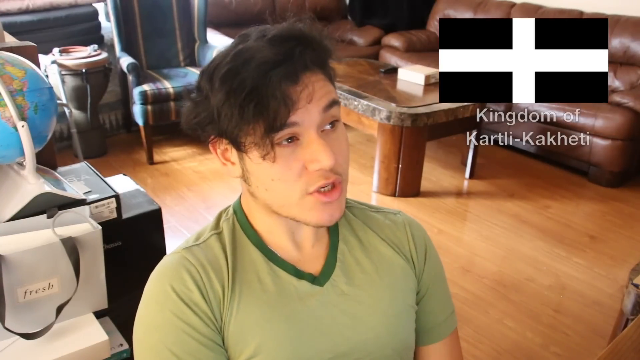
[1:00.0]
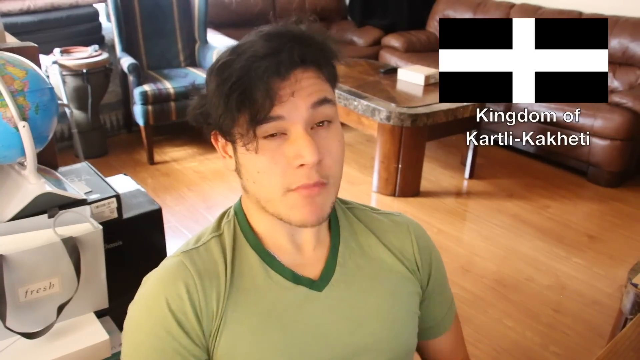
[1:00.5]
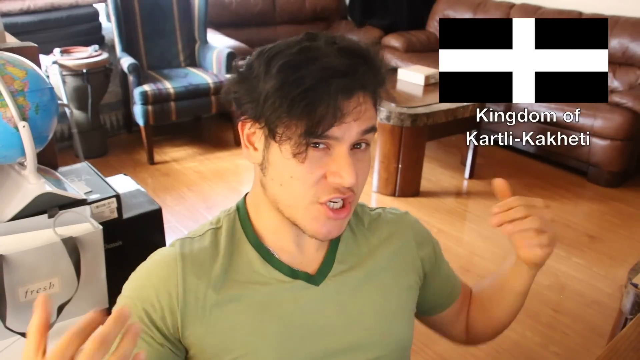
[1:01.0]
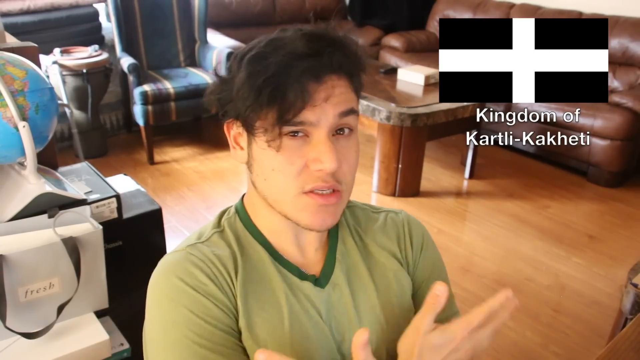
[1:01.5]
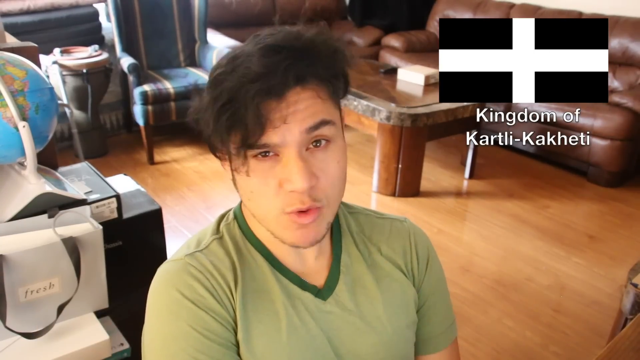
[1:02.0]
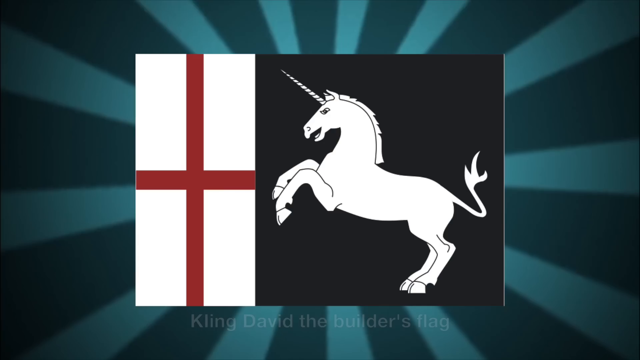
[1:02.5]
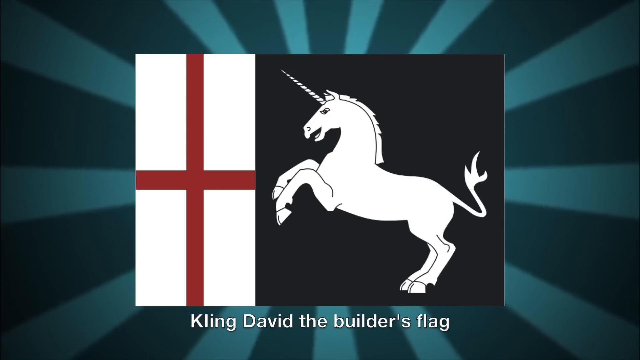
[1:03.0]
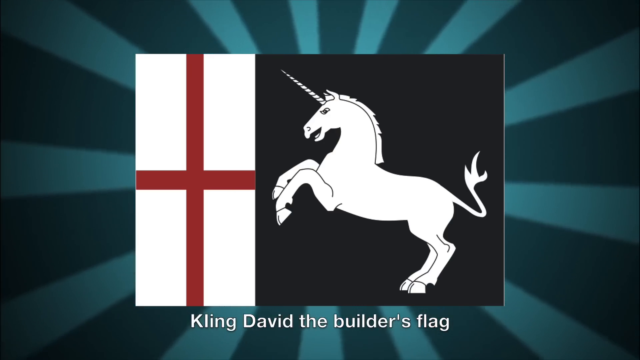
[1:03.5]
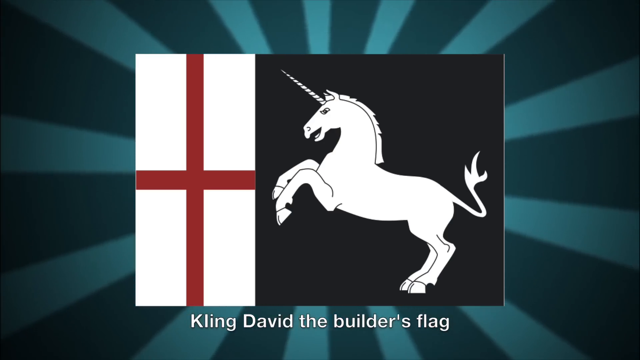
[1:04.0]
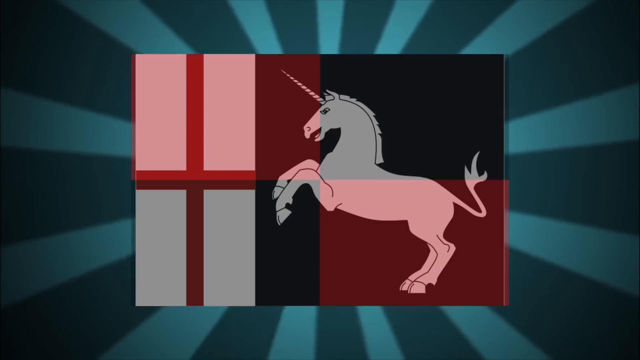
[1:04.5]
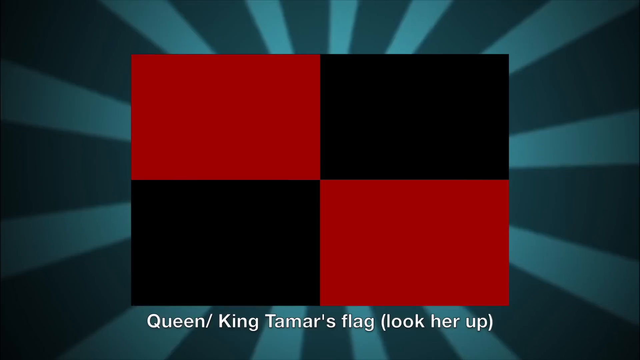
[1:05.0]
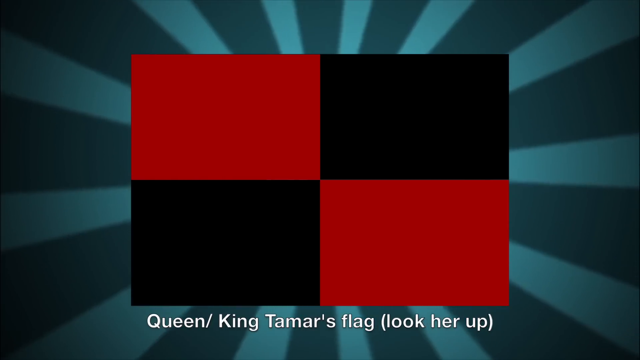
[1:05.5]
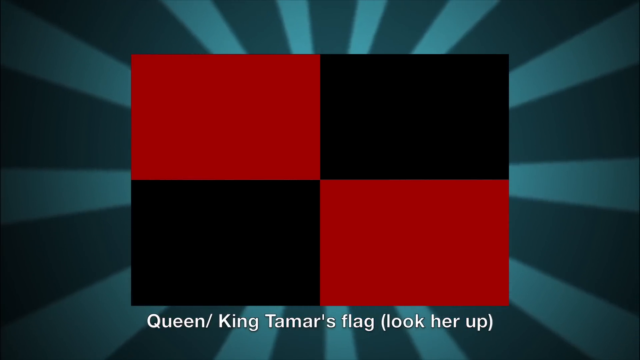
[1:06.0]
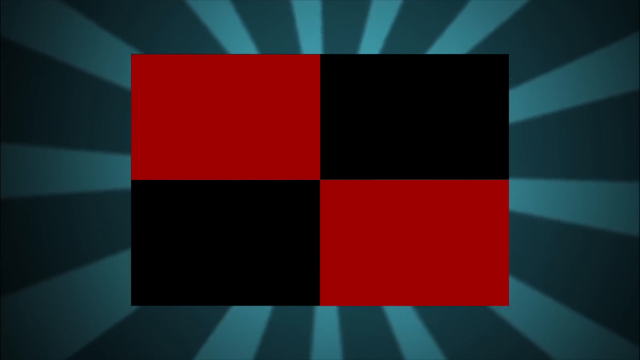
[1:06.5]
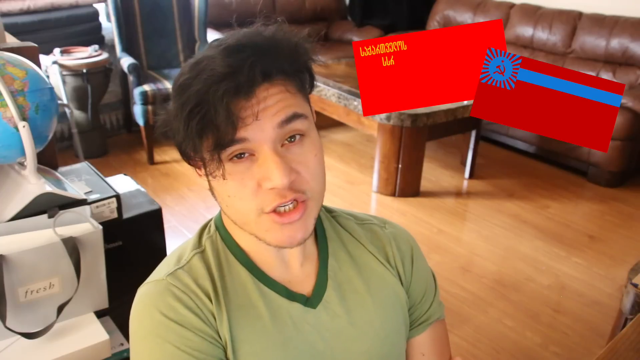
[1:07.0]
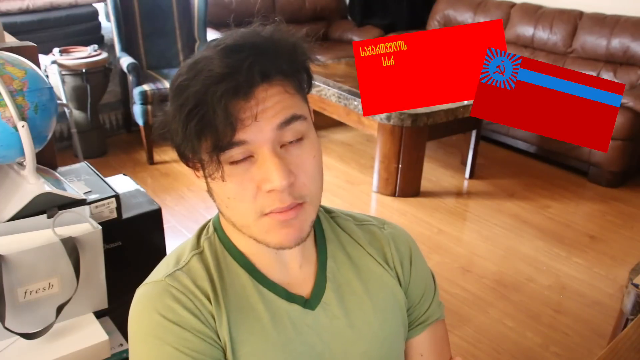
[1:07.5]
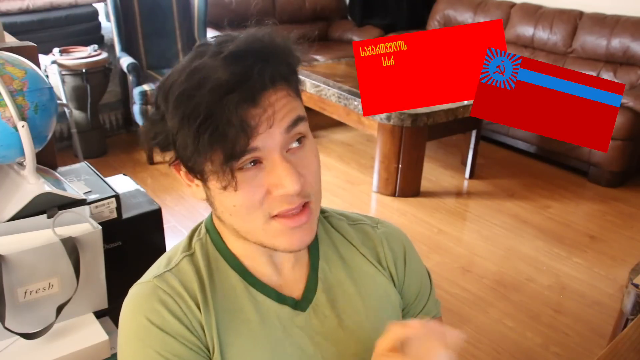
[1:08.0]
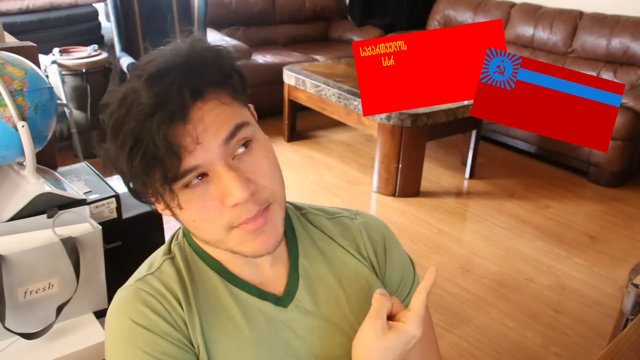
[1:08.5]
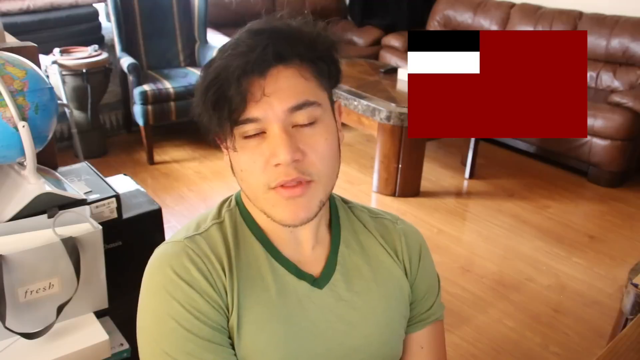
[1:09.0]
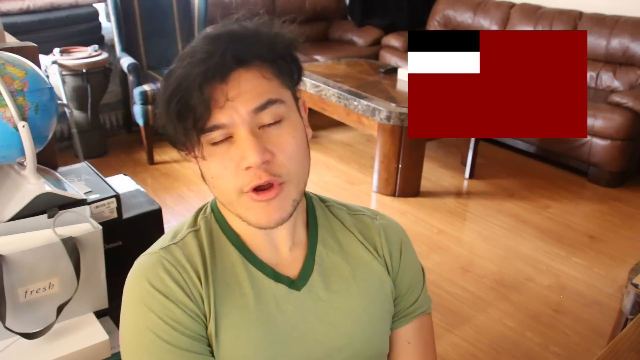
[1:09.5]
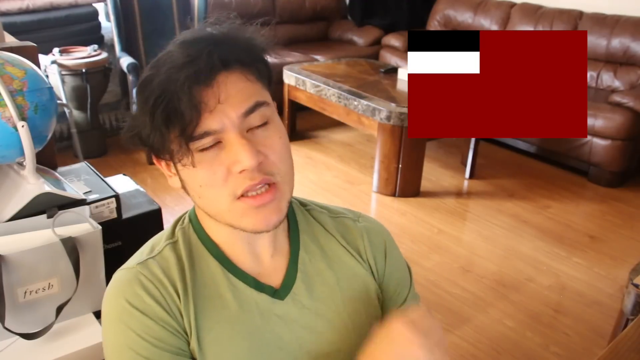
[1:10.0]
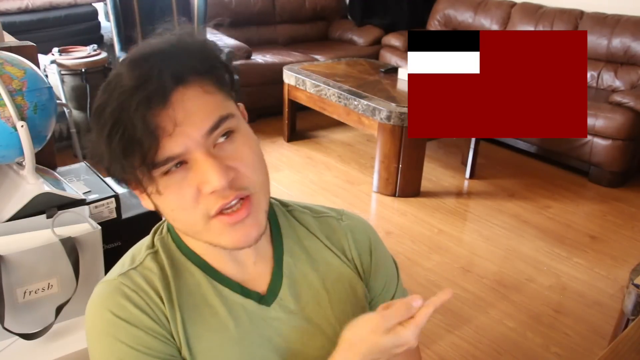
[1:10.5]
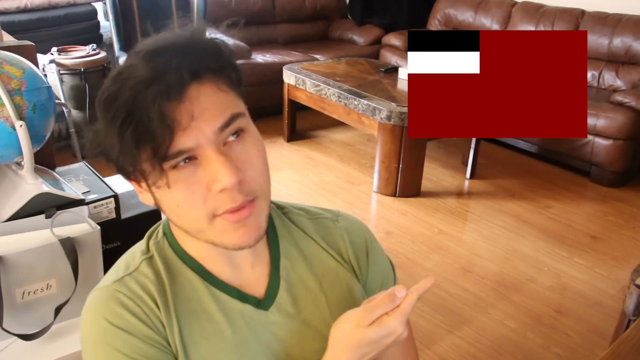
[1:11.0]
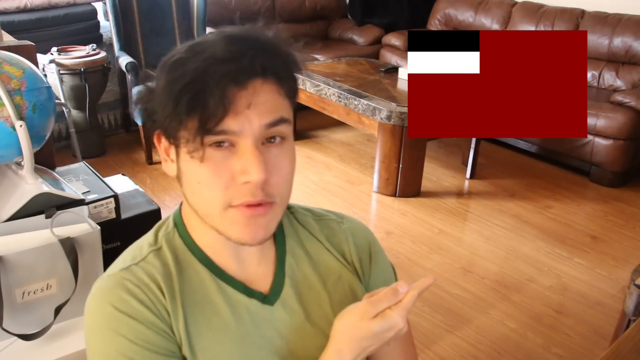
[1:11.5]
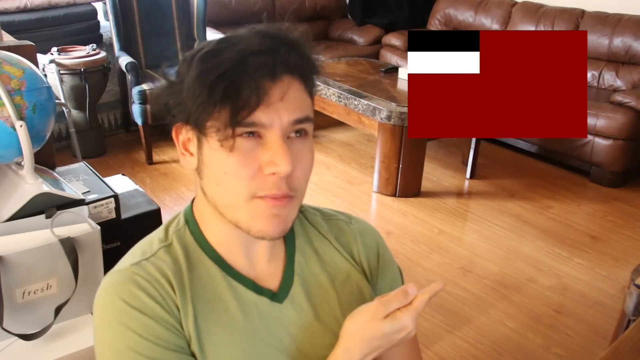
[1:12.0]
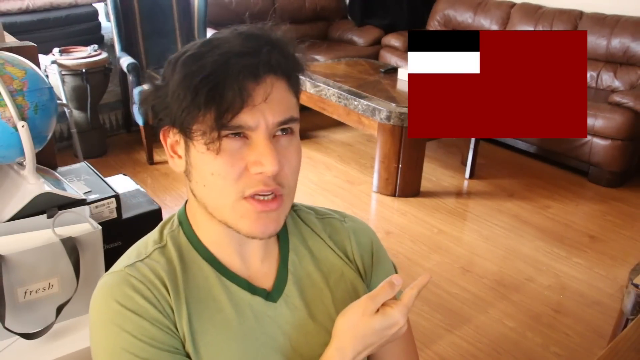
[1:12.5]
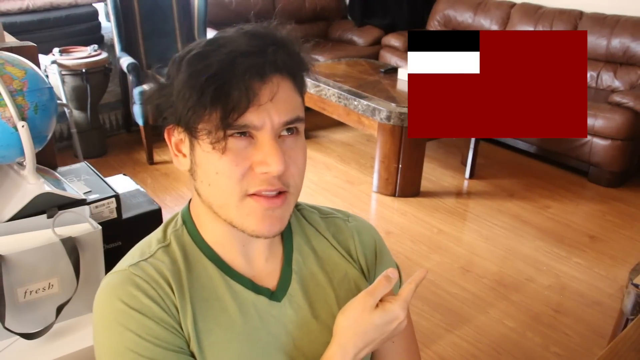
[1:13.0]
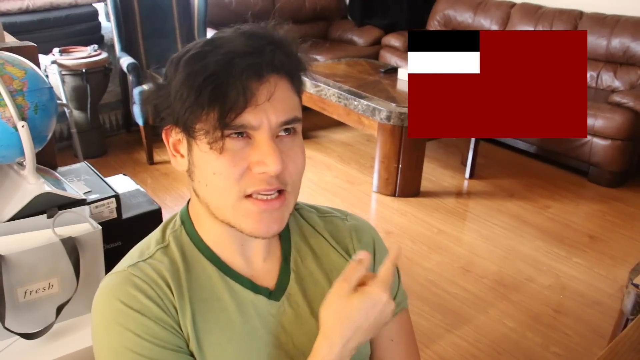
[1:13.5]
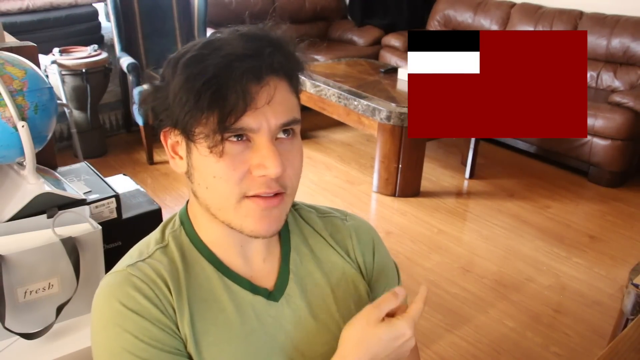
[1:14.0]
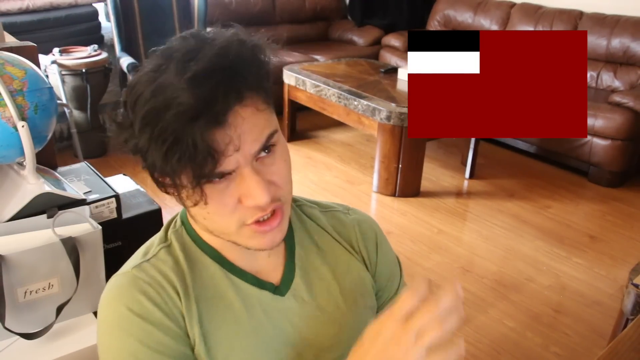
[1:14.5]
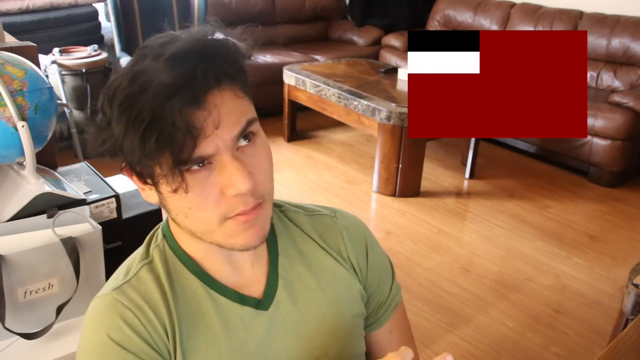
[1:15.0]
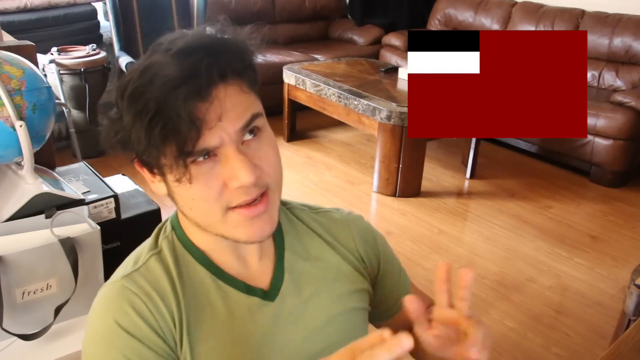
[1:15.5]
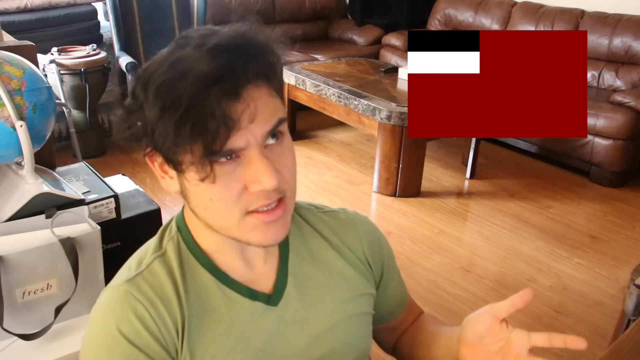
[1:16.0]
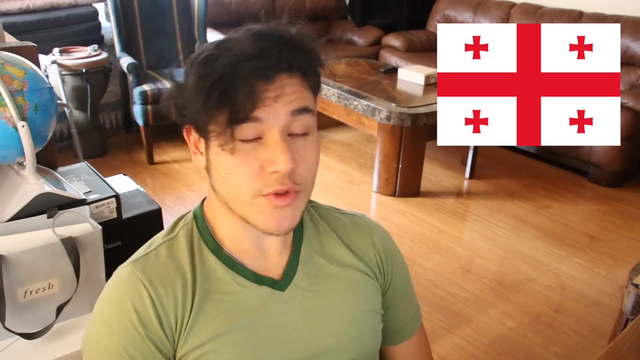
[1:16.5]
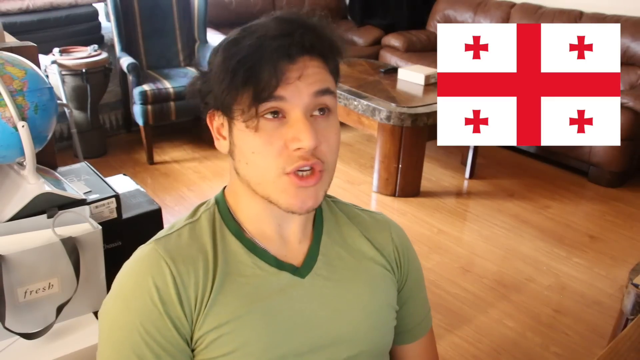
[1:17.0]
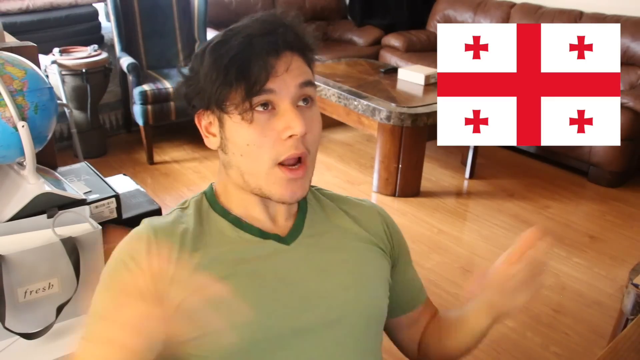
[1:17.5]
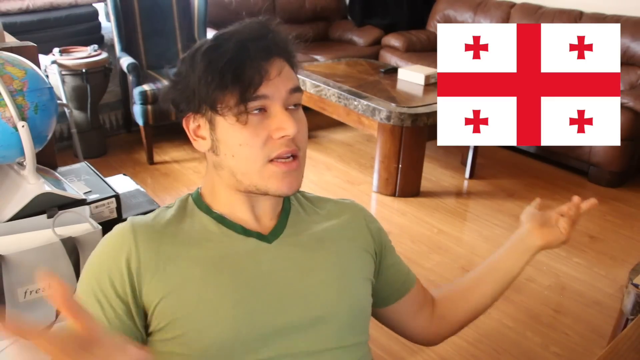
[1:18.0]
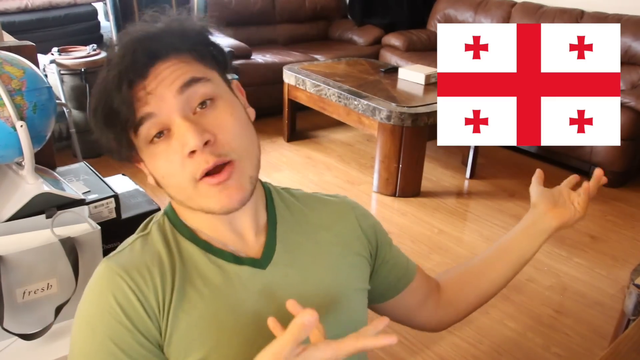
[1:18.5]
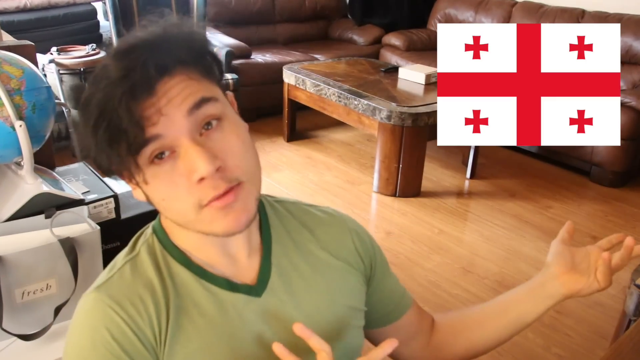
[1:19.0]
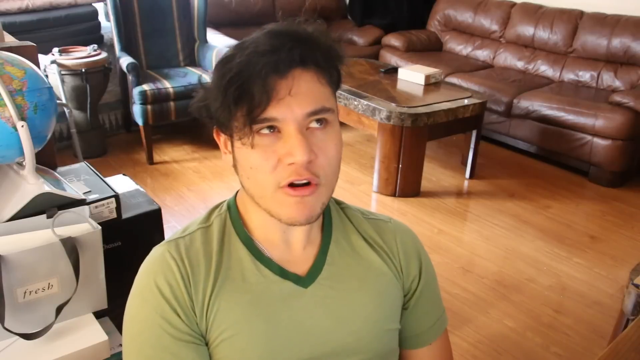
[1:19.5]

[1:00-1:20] The Asian man continues to talk, and a black flag with a white cross in the middle appears, reading "Kingdom of Patli Paketi" at the bottom. The man uses hand gestures while this flag is on screen. It changes to another flag, three quarters of which shows a white horse that looks like a unicorn, while the rest is white with a red cross. Another flag, red and black, follows, with something written at the bottom. The scene returns to the man, and two flags appear on the right before changing again to show the first flag.